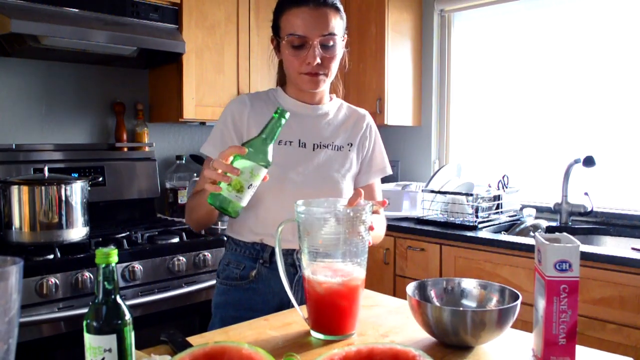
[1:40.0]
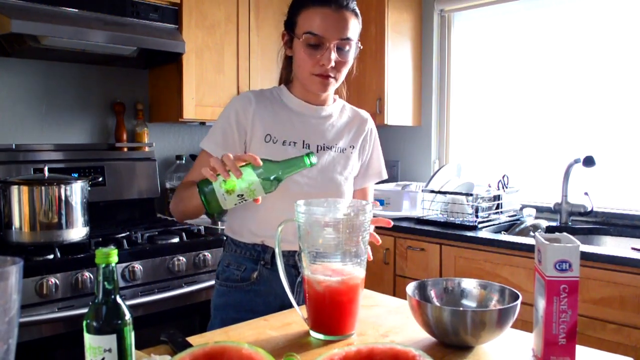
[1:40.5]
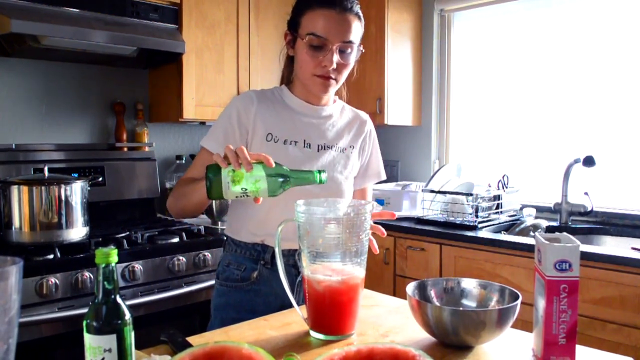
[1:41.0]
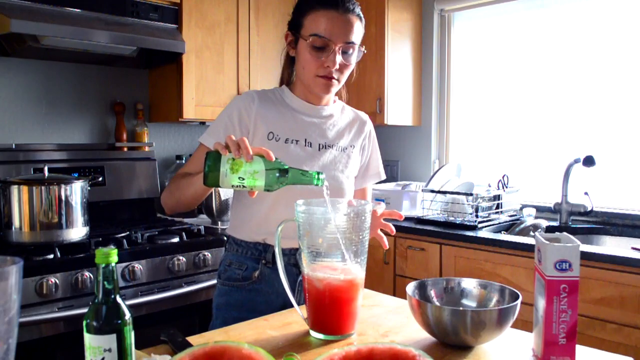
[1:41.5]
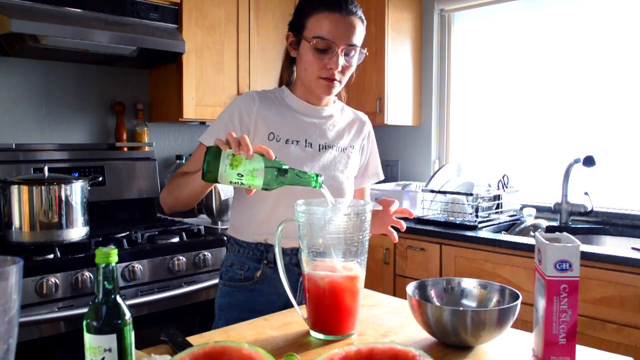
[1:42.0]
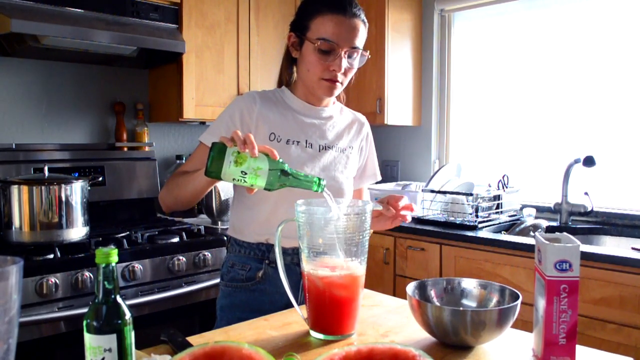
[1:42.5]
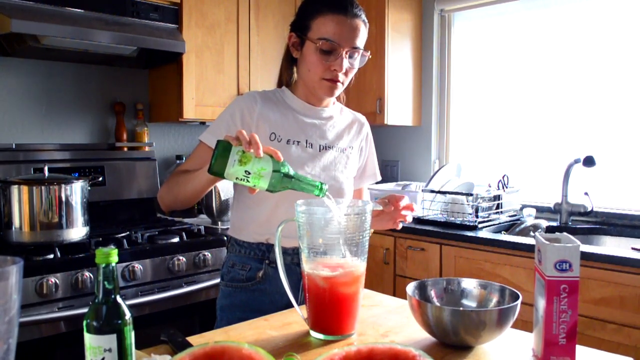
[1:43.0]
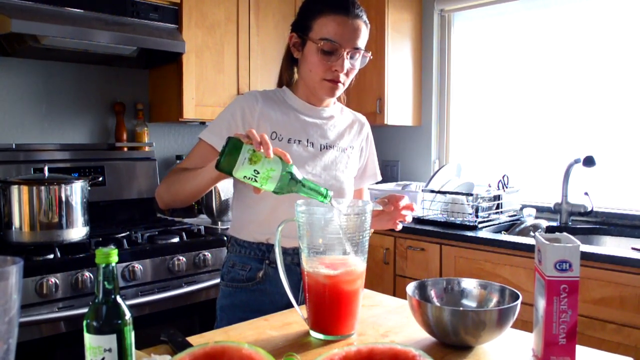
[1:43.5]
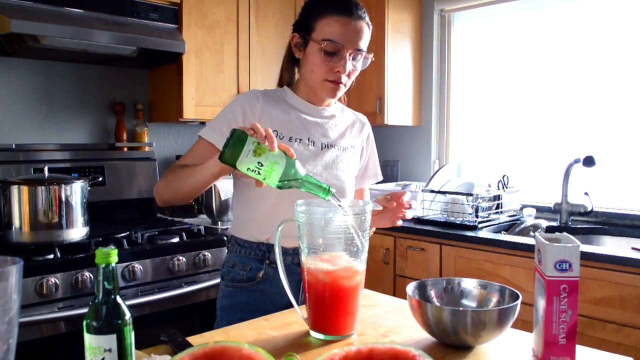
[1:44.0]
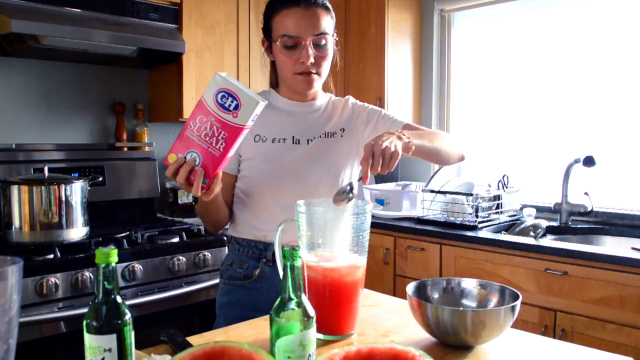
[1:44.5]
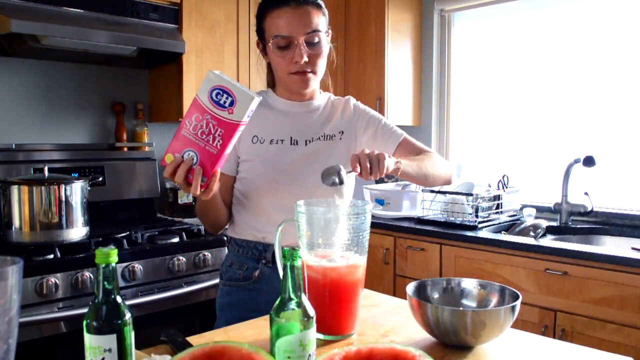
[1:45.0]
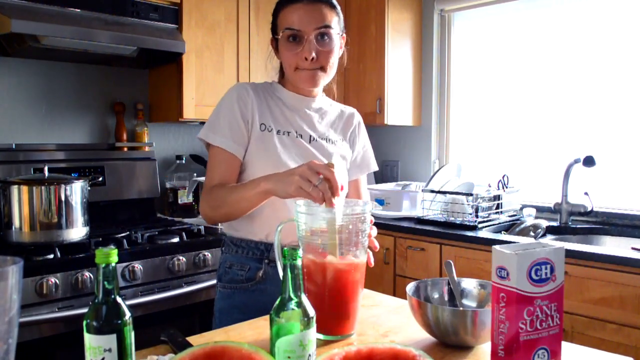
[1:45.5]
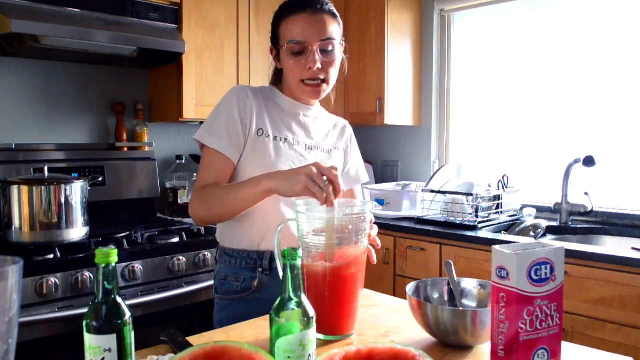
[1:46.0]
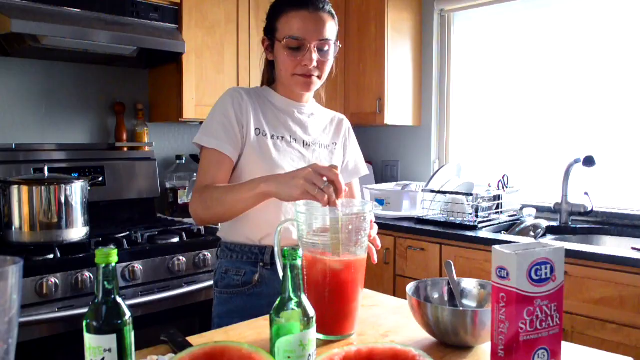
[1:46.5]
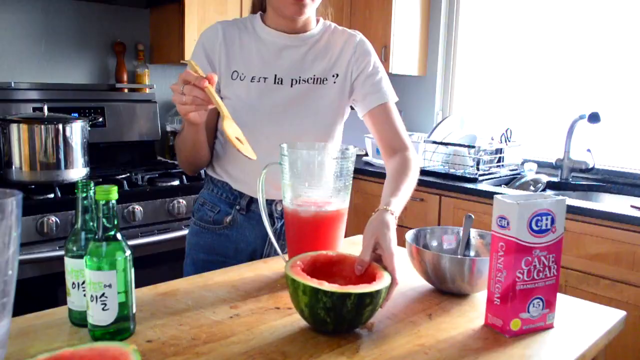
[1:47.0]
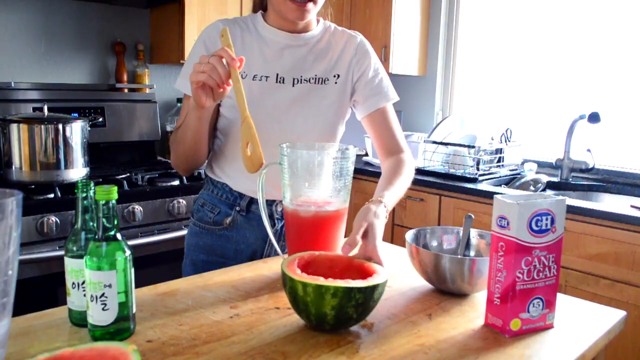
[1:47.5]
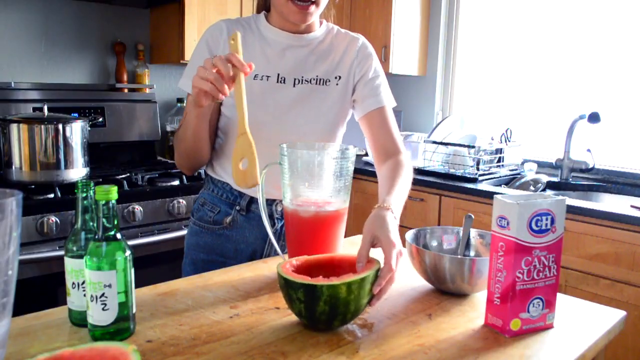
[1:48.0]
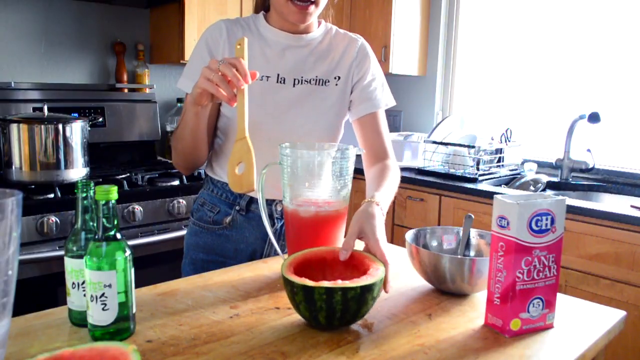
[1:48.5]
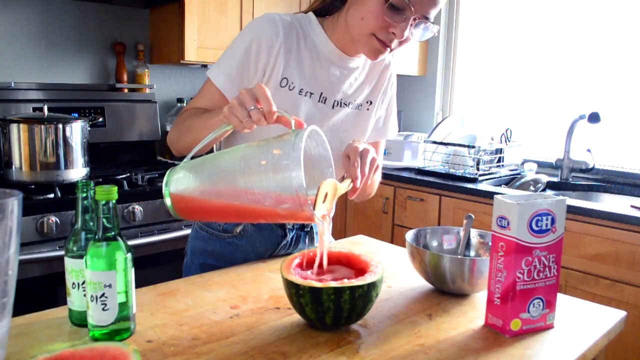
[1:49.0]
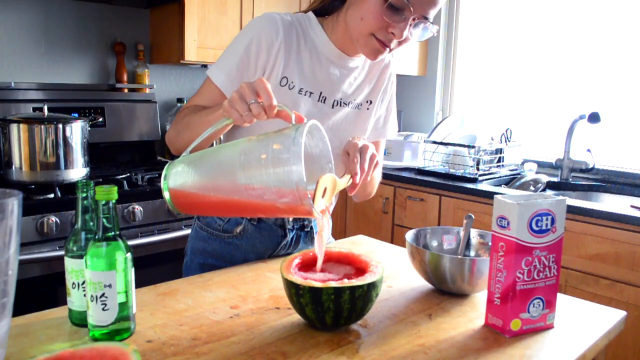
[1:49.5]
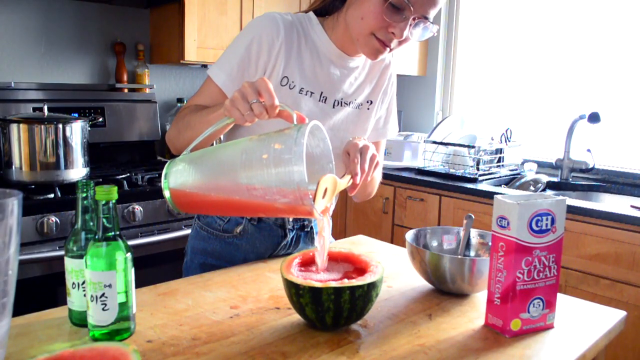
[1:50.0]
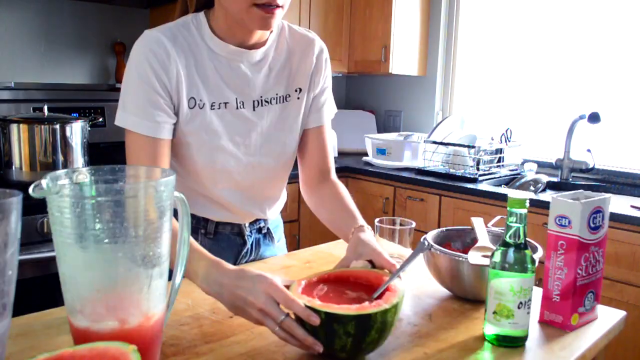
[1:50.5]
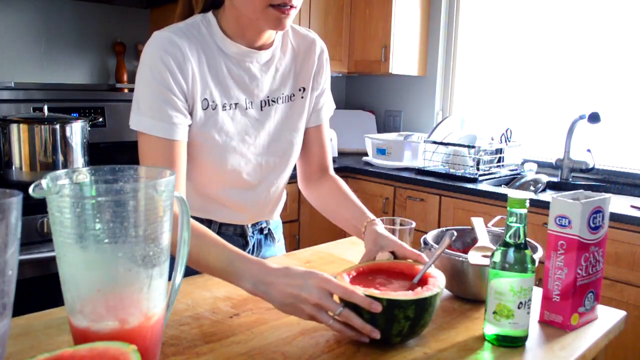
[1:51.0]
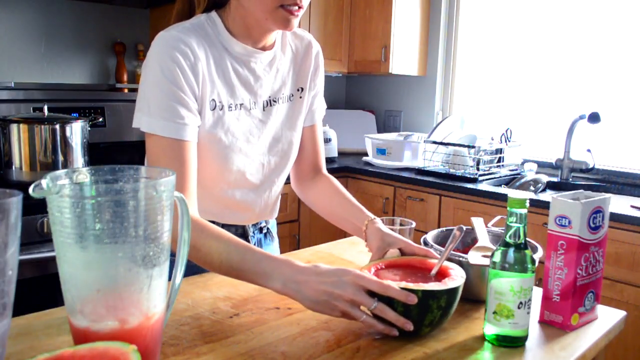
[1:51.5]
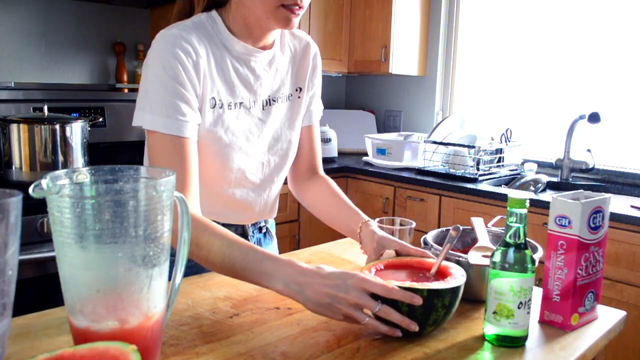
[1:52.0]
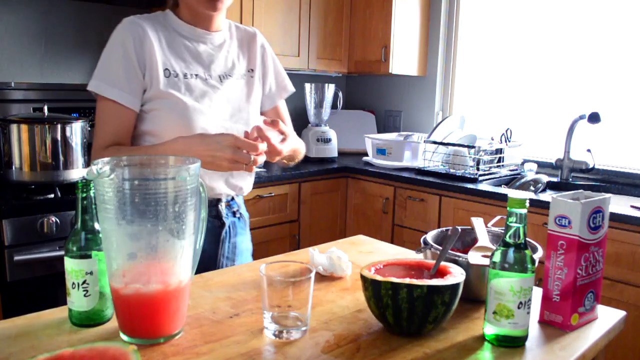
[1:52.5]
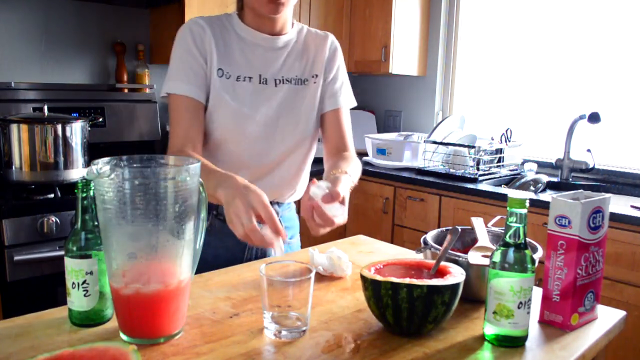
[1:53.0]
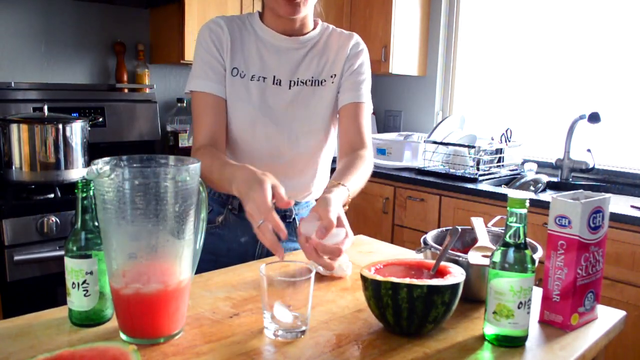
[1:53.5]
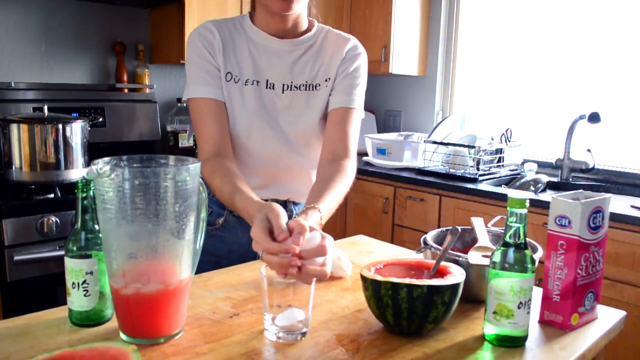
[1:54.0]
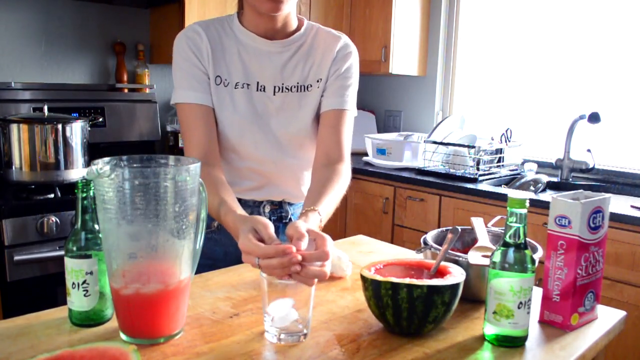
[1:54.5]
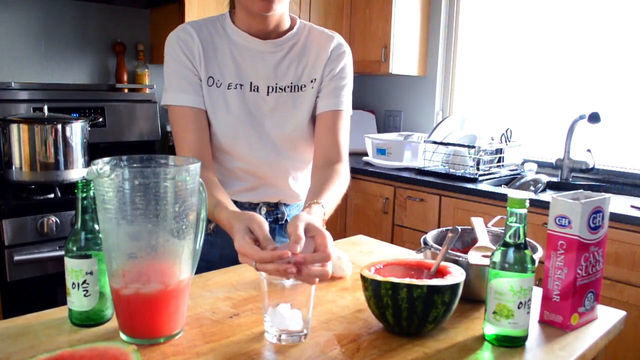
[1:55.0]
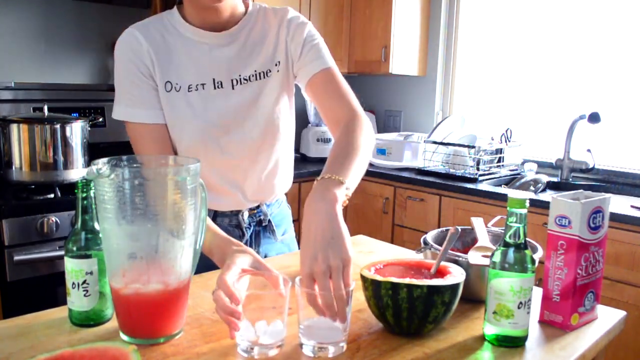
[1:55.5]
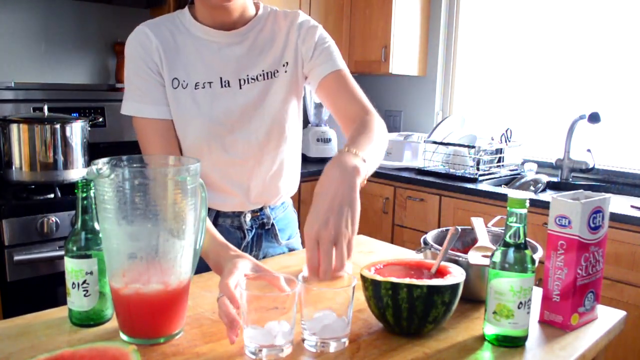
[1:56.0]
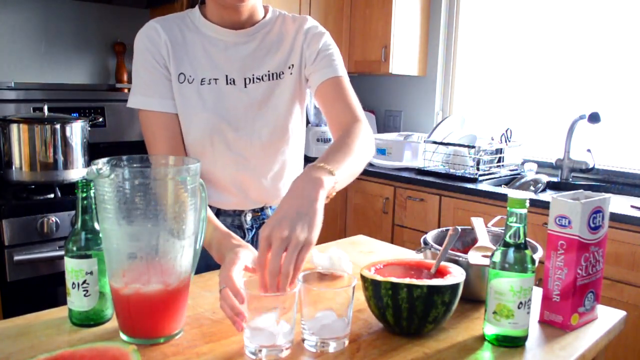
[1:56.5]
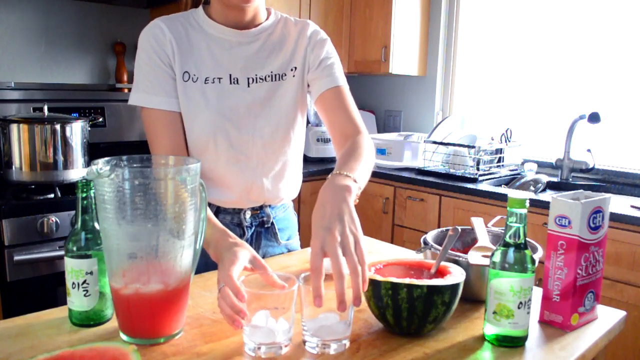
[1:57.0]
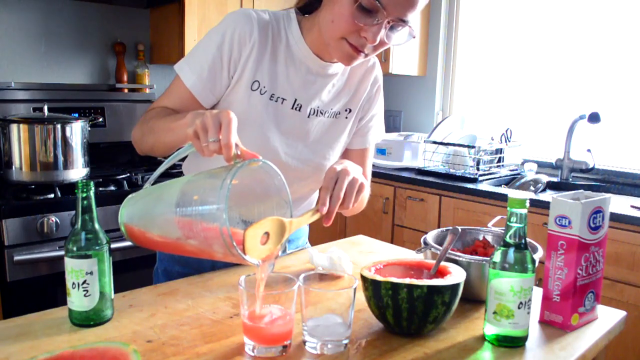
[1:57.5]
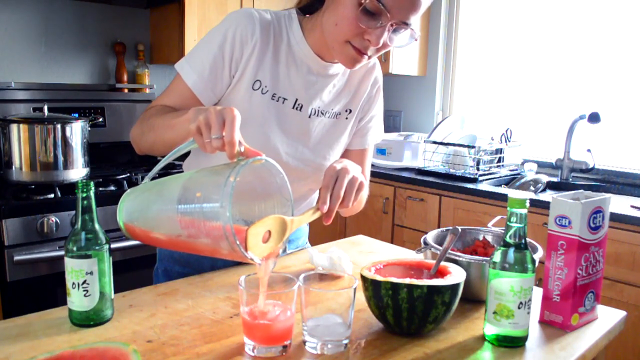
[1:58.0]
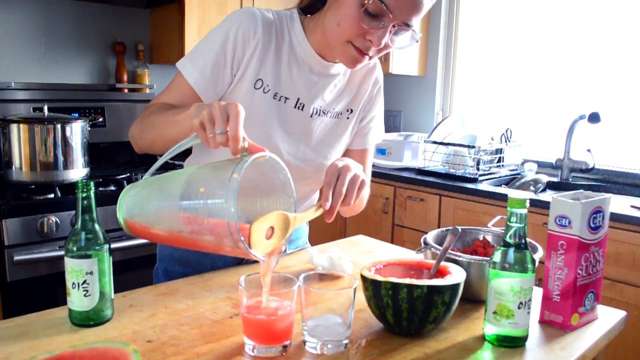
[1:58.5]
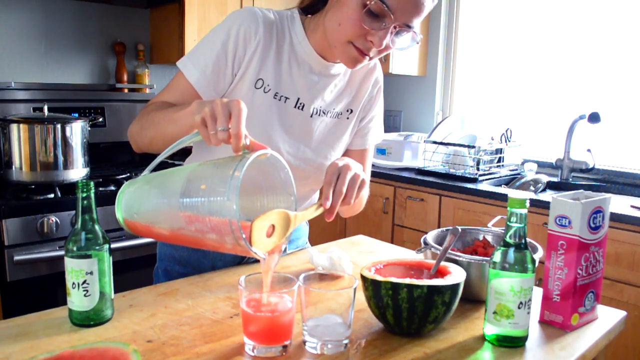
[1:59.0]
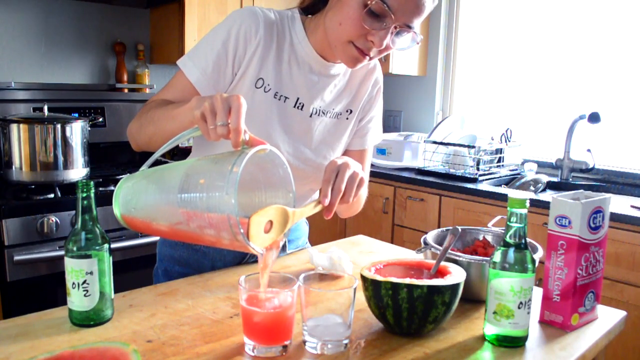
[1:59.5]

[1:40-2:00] A woman stands at a counter in her kitchen with a pitcher in front of her holding the blended watermelon mixture on ice. In her right hand is a green bottle whose writing is hard to read and looks like Korean; it is probably some sort of Korean alcoholic beverage. With the top off the bottle, she pours it into the pitcher with the watermelon mixture, then adds some sugar, stirs it and dances. She takes the watermelon half she had scooped out, pours from the pitcher into it until it is full to the top, and leaves a spoon in the watermelon for serving the drink. She moves it to the side. She then puts ice cubes into two clear glasses and pours the watermelon mixture into them, using a spoon to keep the ice in the pitcher from falling into the glasses.